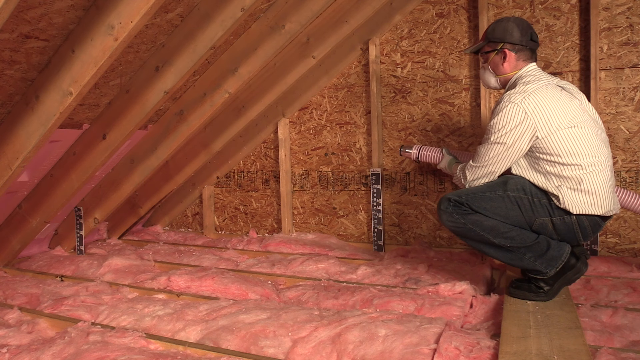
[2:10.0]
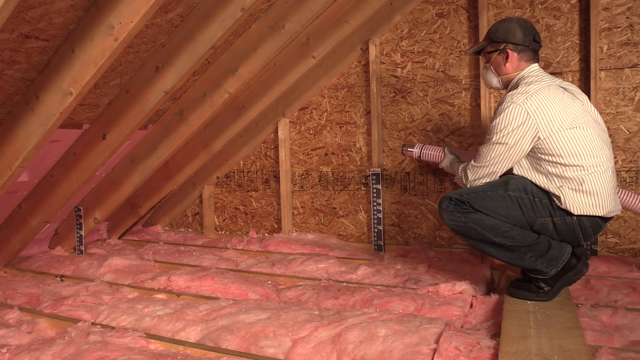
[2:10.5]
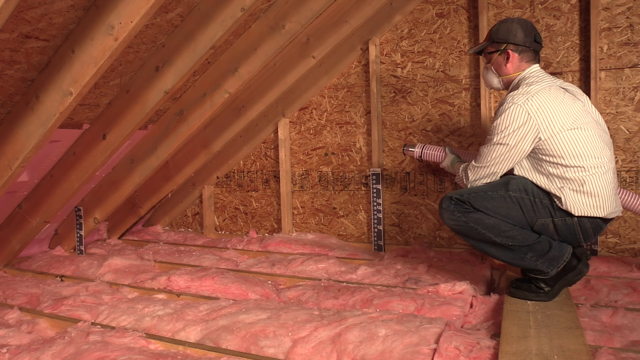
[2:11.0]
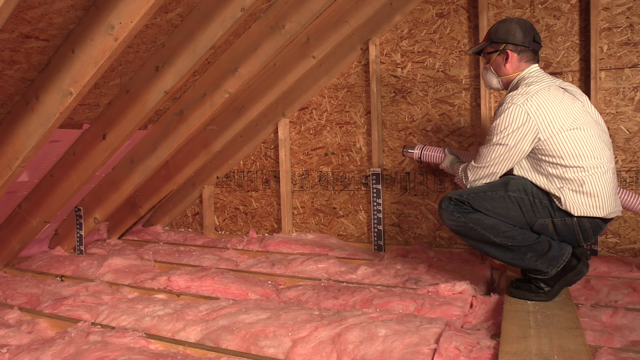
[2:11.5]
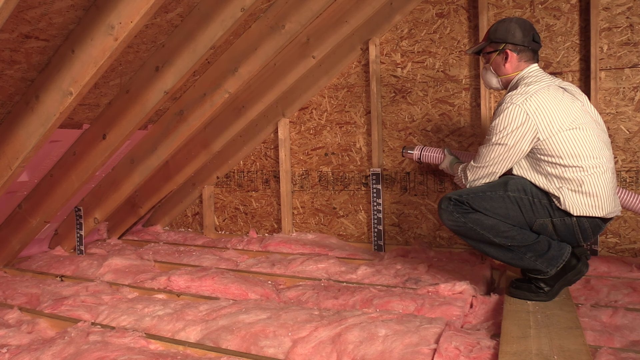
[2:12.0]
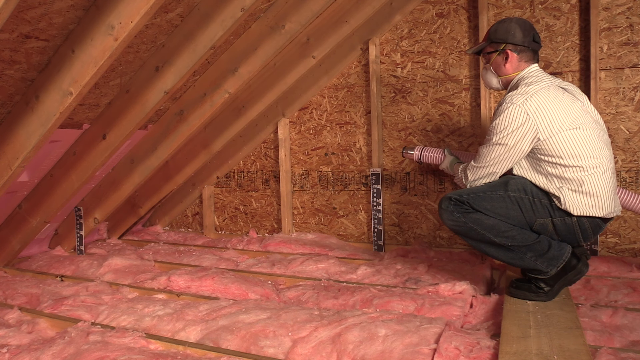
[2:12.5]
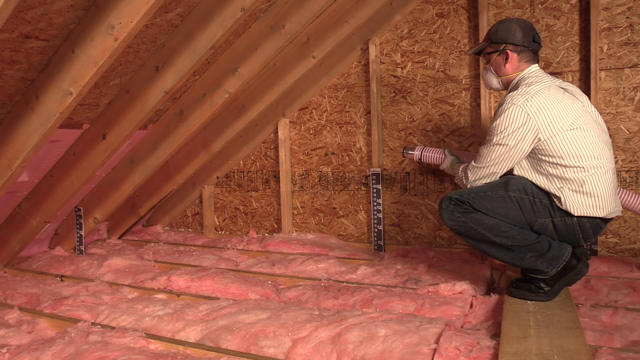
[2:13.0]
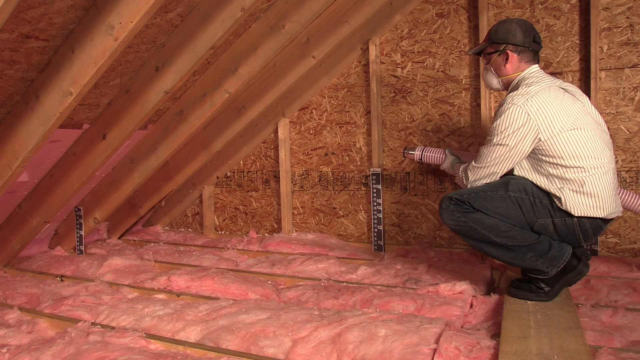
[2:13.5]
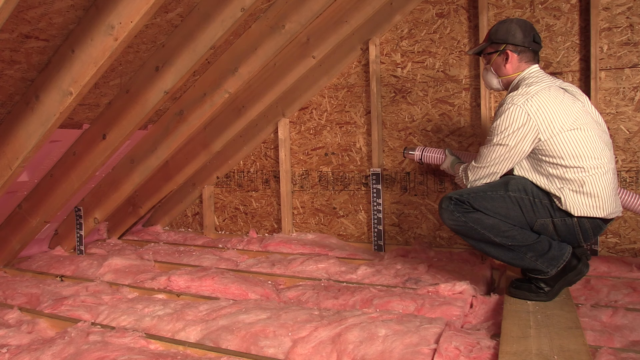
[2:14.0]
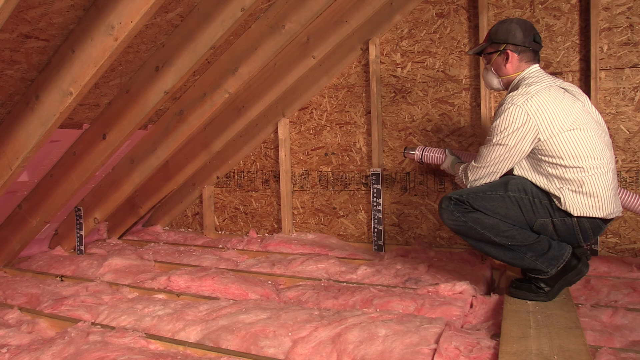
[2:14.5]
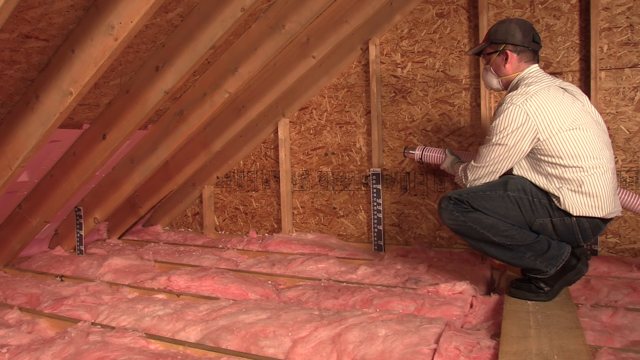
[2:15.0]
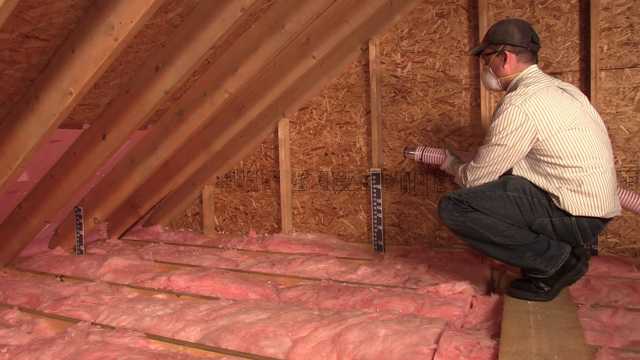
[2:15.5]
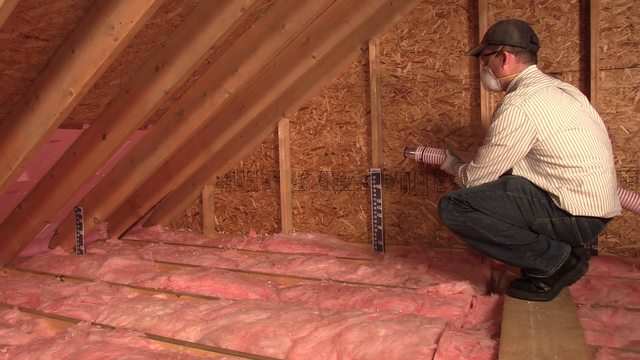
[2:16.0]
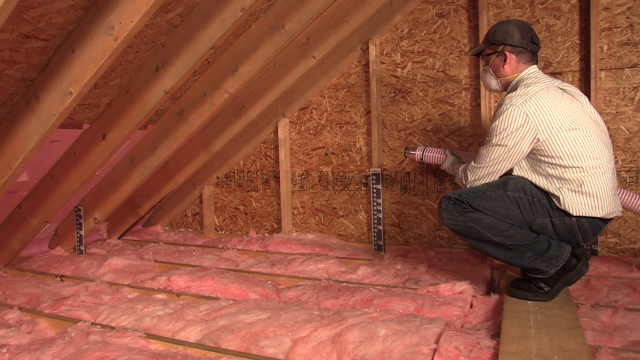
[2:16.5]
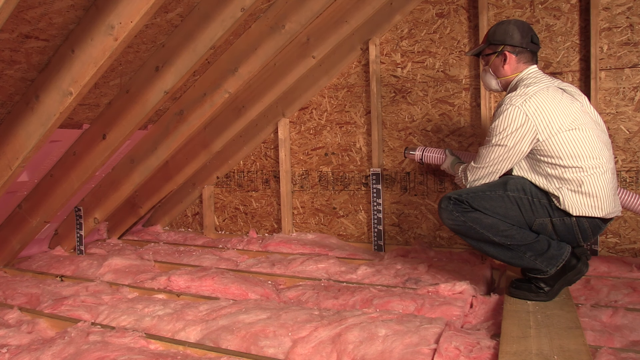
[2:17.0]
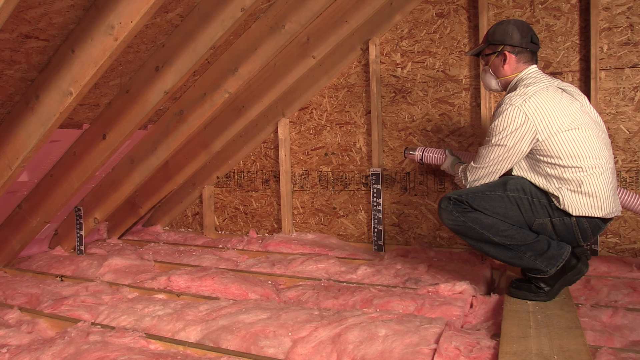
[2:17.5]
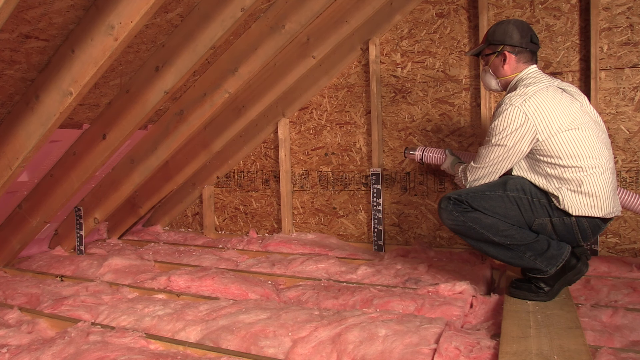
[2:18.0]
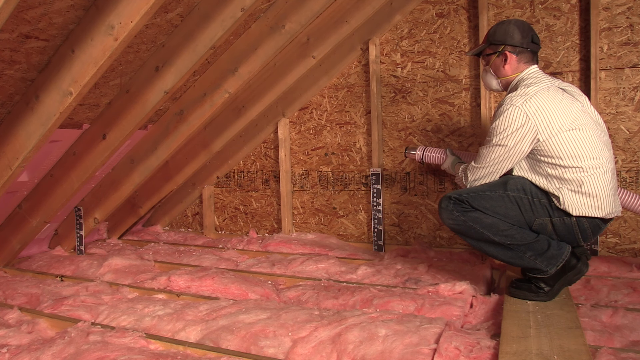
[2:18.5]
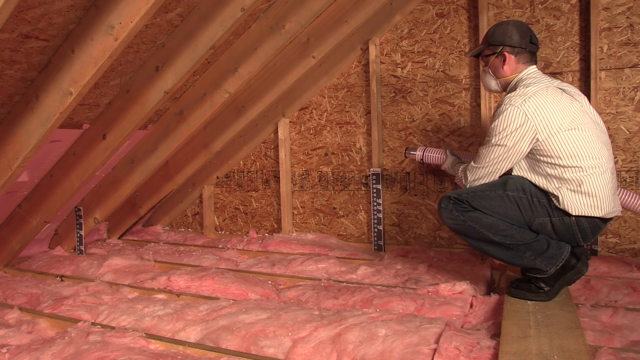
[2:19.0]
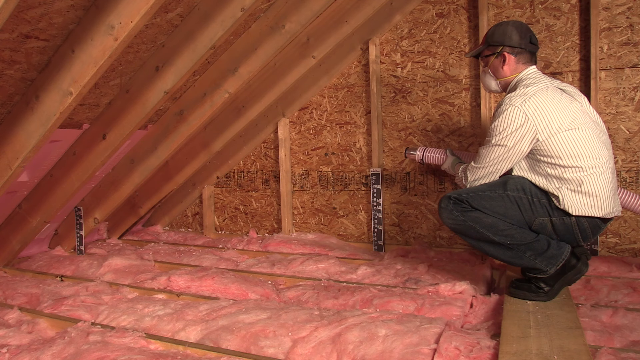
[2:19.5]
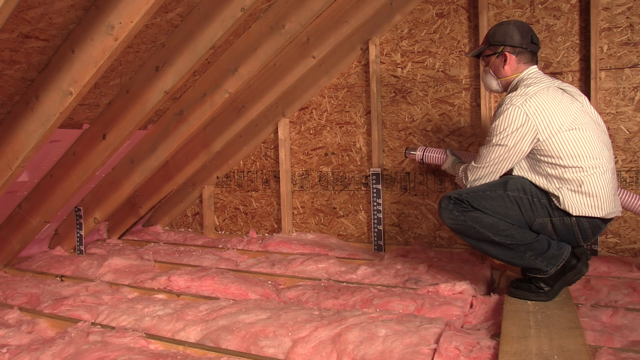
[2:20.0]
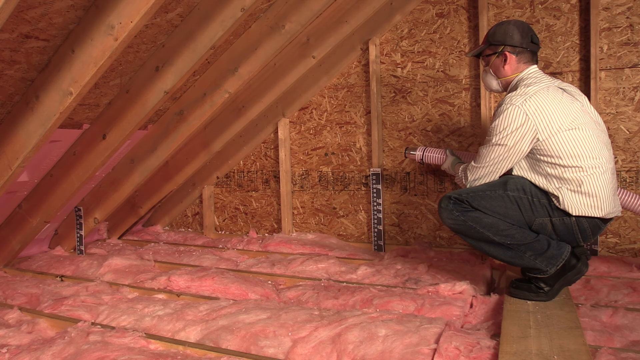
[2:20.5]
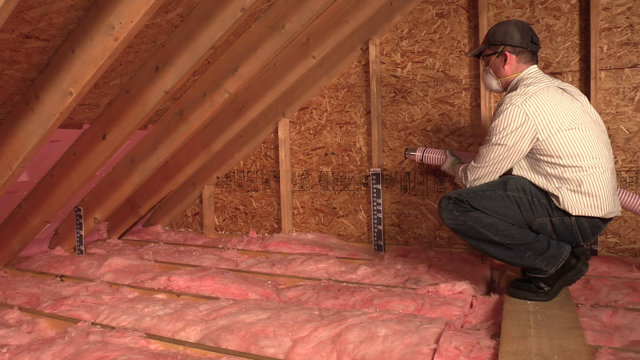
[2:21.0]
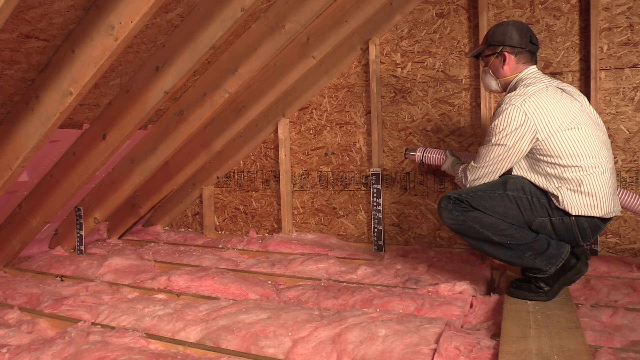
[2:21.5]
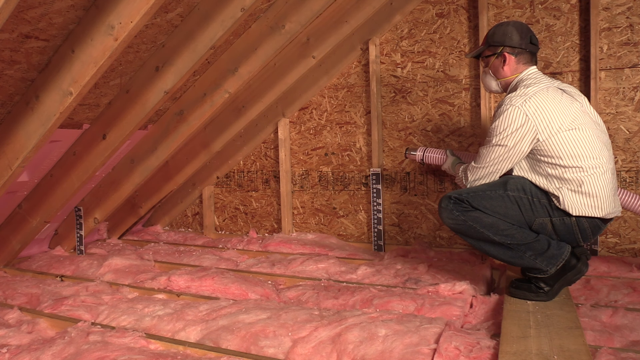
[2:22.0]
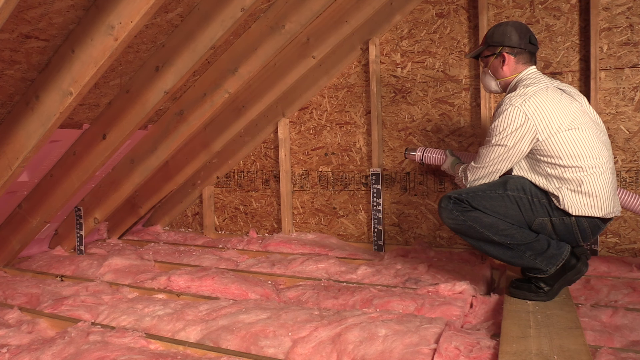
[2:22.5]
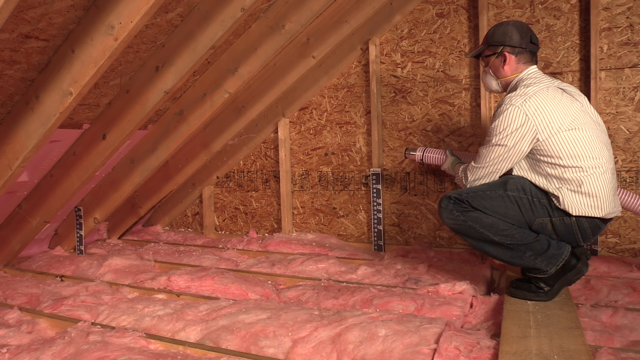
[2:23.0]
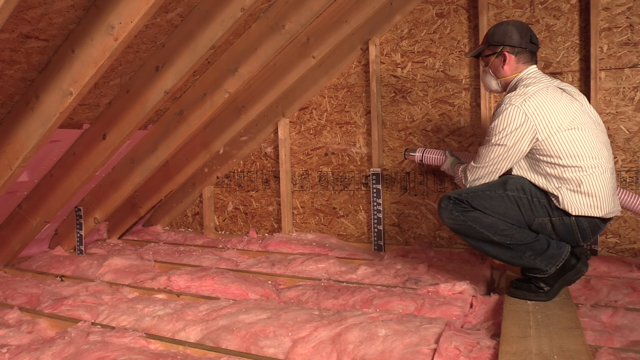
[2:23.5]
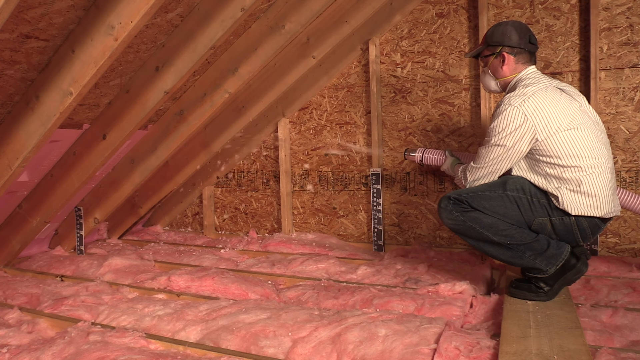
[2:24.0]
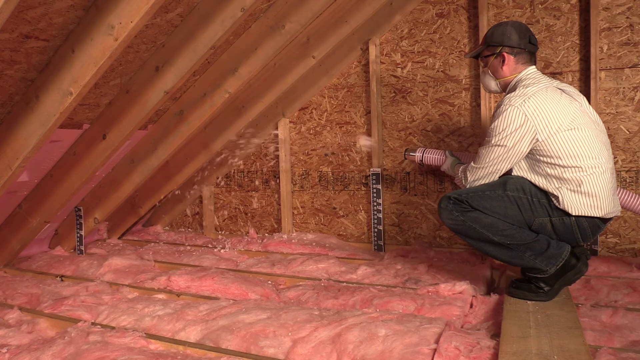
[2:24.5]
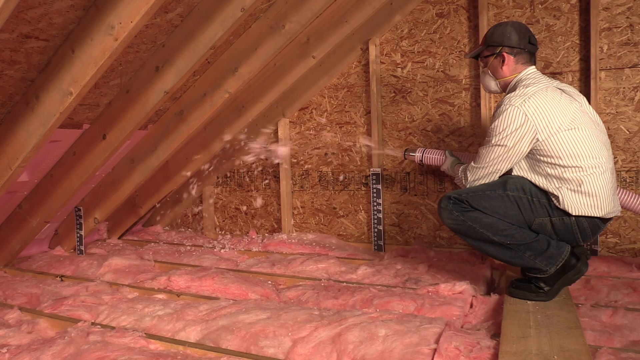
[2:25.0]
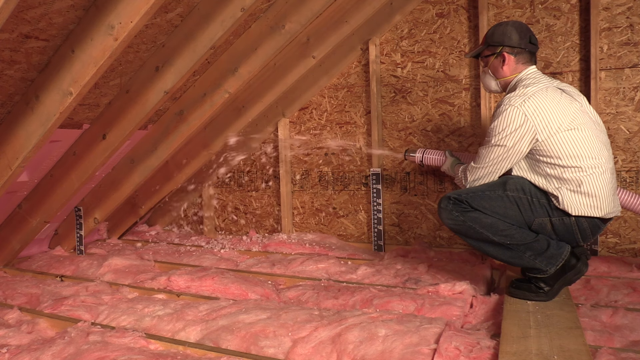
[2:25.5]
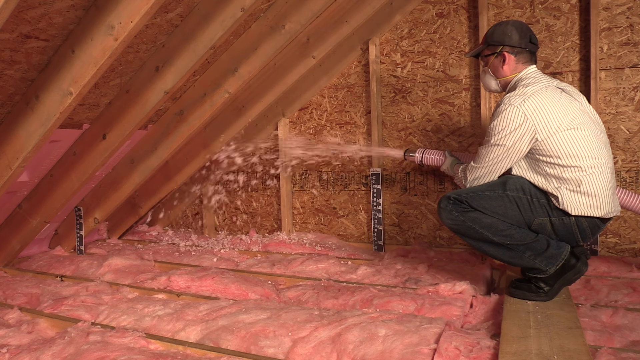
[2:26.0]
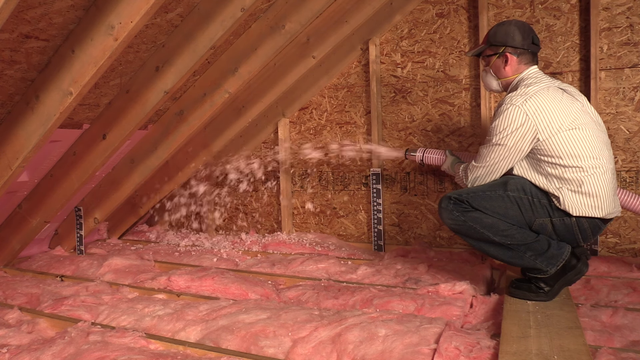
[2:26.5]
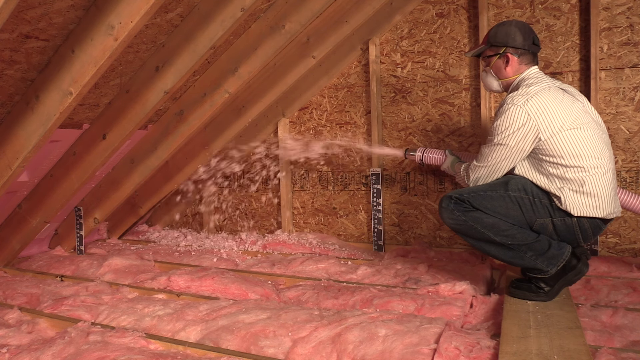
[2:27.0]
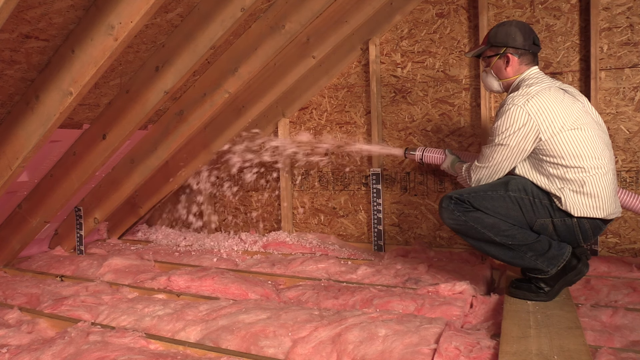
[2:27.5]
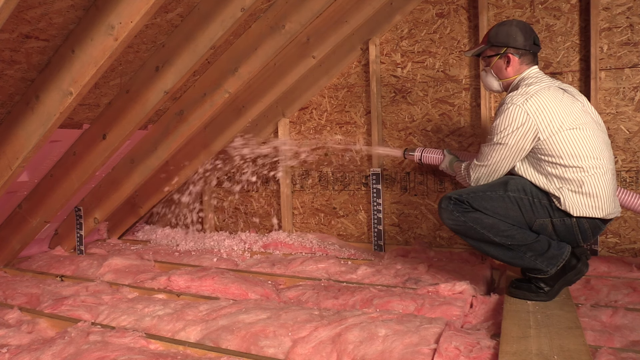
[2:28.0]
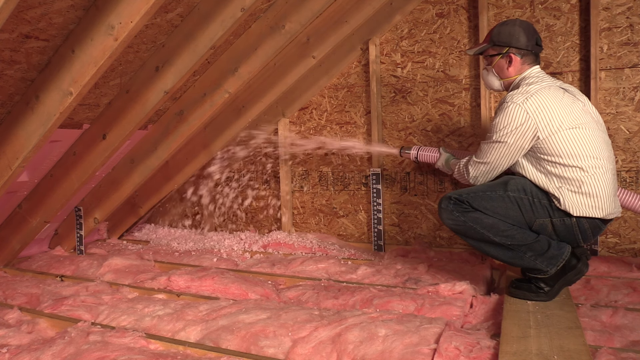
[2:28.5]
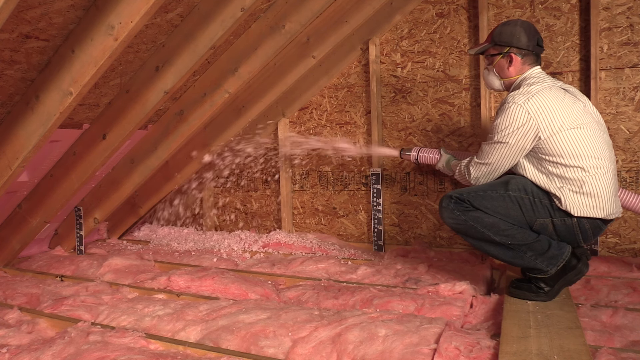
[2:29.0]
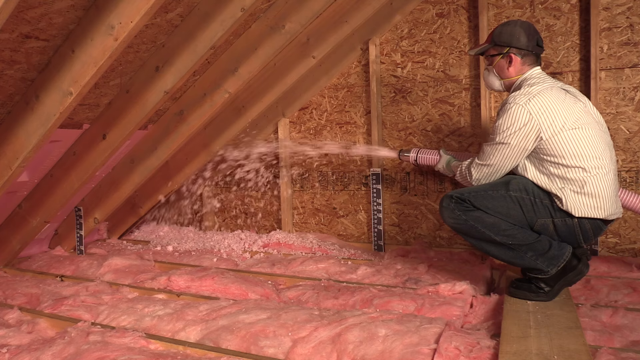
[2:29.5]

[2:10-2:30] A man crouches on a plank inside an attic, wearing black shoes, black pants, a white and gray vertically striped shirt, a white mask over his nose and mouth, a black ball cap, and gloves. His left side is visible as he holds a pink hose aimed toward the left of the screen; the front part of the hose is visible, the middle is hidden by him, and the back part goes behind his right side and off the back of the image. A particle board wall is in the background, insulation is all around underneath the board he crouches on, and slanted planks on the upper left look like the interior angles of a roof. At first nothing comes out of the hose, then material slowly begins to come out and speeds up a little. On the particle board wall behind him, the black and white measuring paper he stapled to the board is visible, tucked behind the insulation at the bottom.